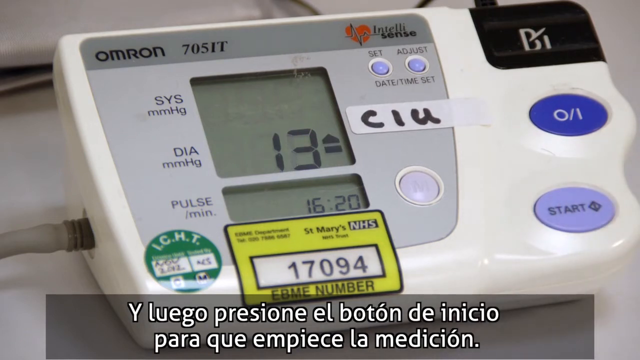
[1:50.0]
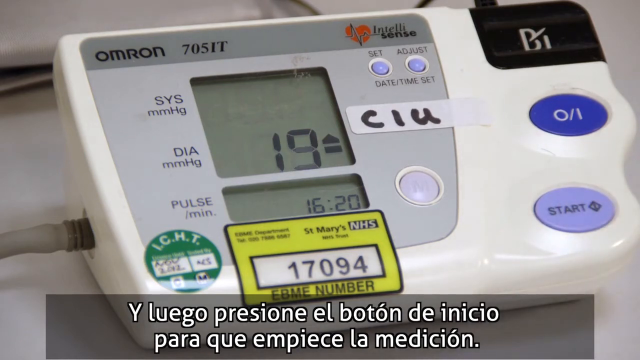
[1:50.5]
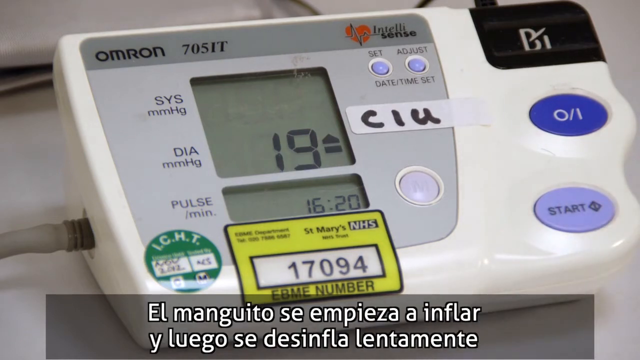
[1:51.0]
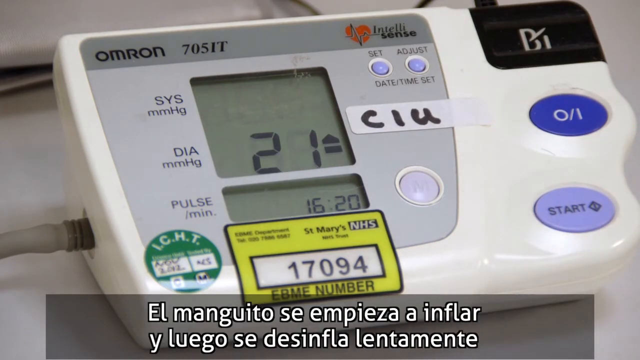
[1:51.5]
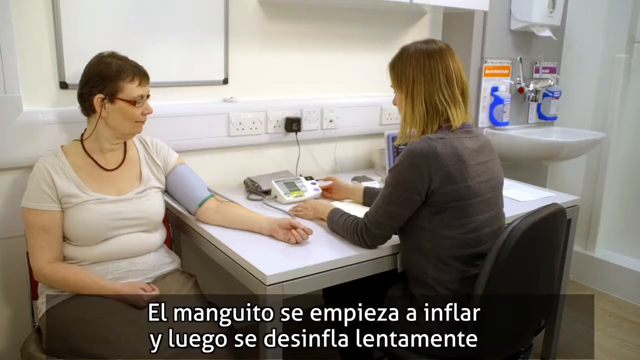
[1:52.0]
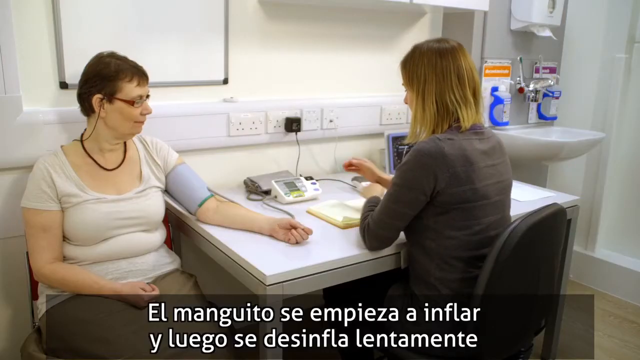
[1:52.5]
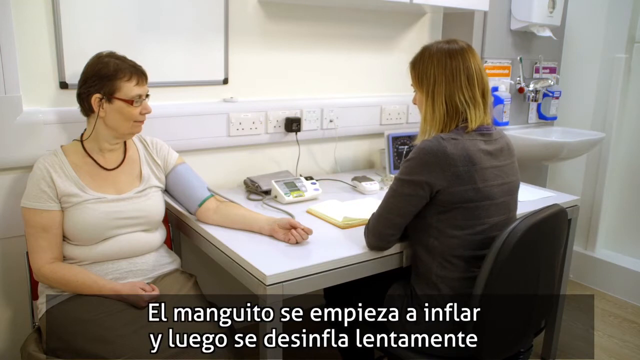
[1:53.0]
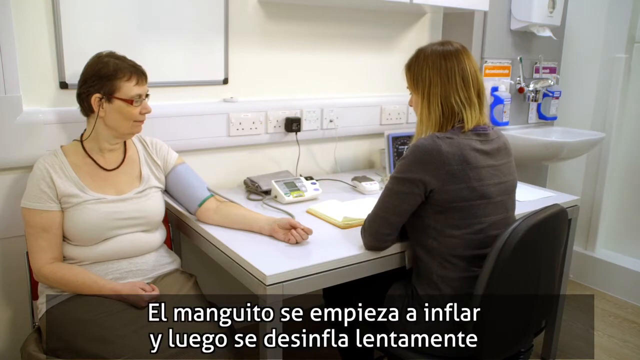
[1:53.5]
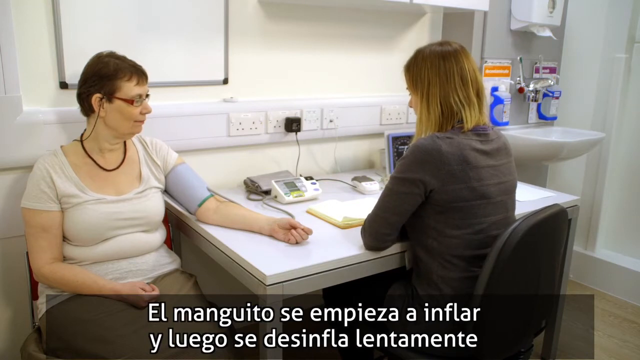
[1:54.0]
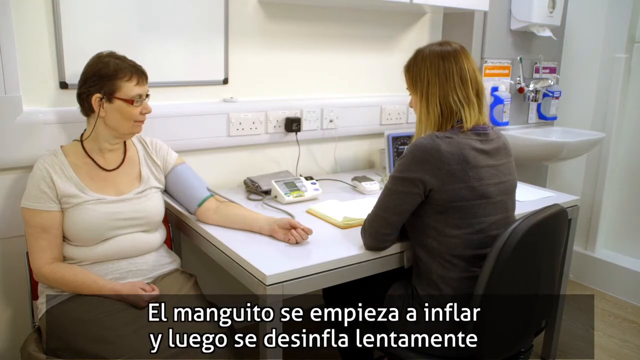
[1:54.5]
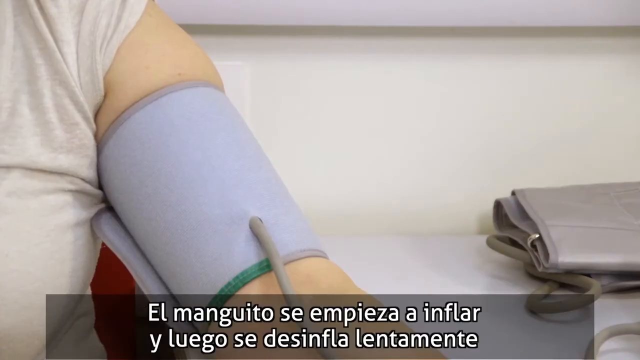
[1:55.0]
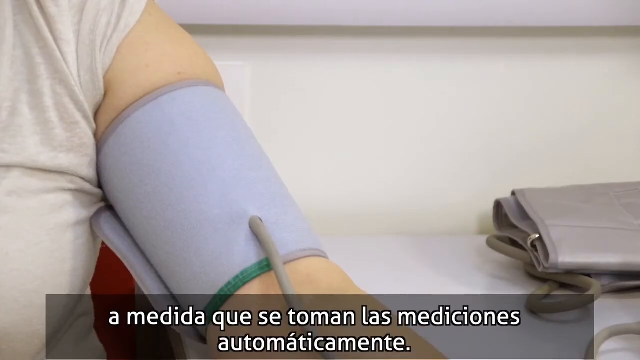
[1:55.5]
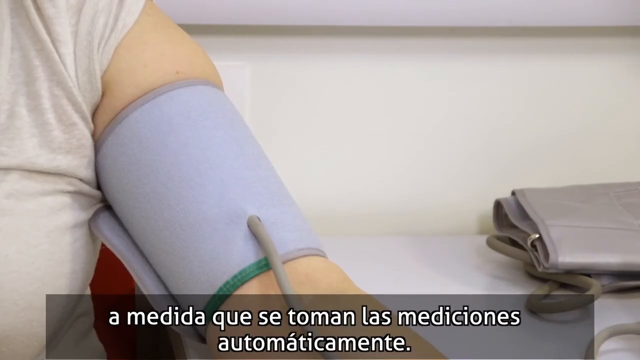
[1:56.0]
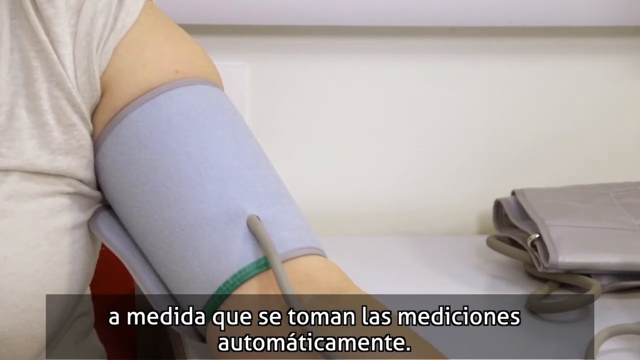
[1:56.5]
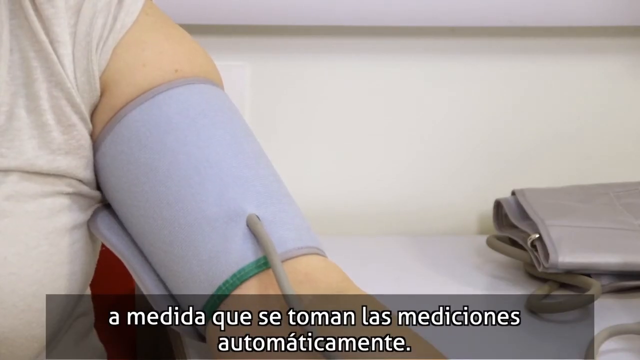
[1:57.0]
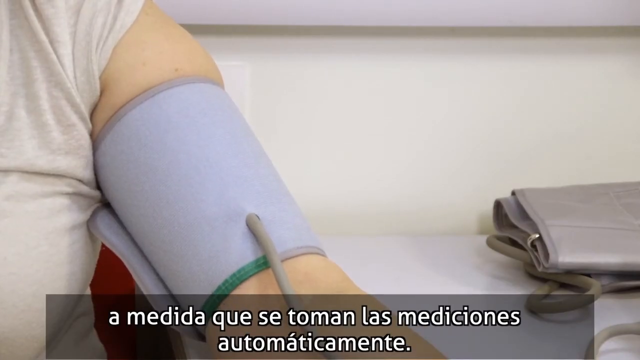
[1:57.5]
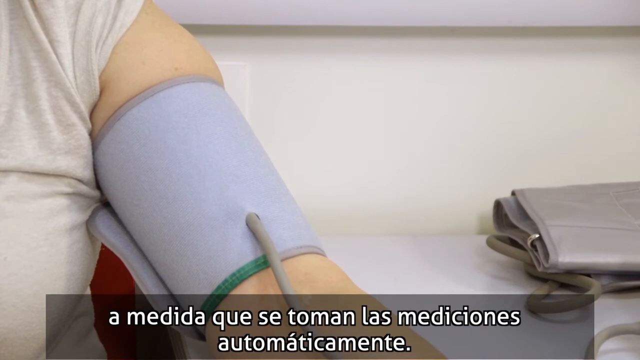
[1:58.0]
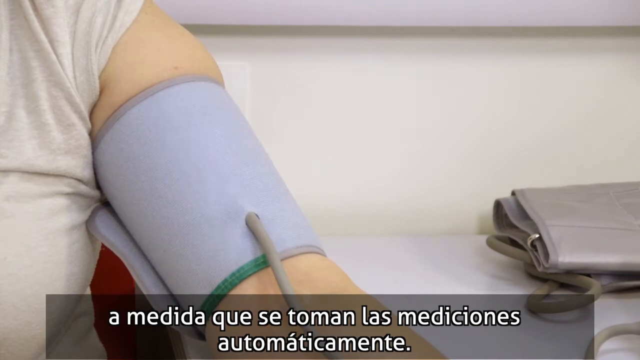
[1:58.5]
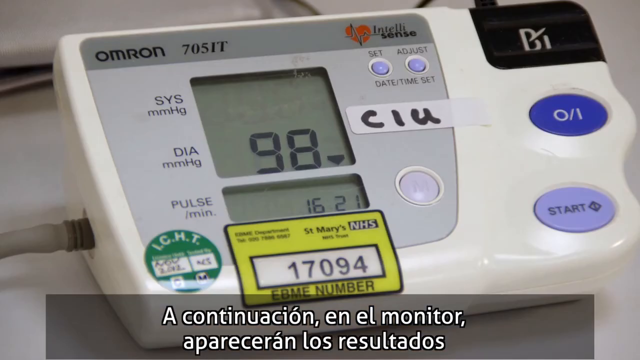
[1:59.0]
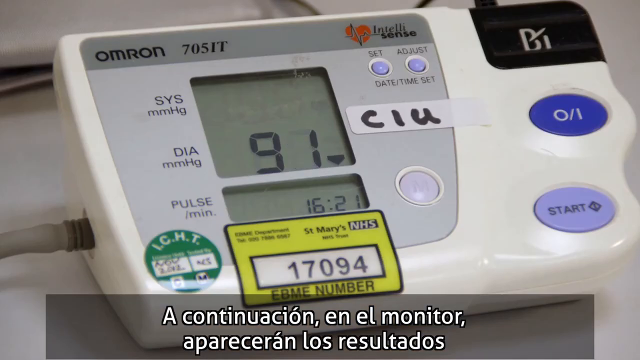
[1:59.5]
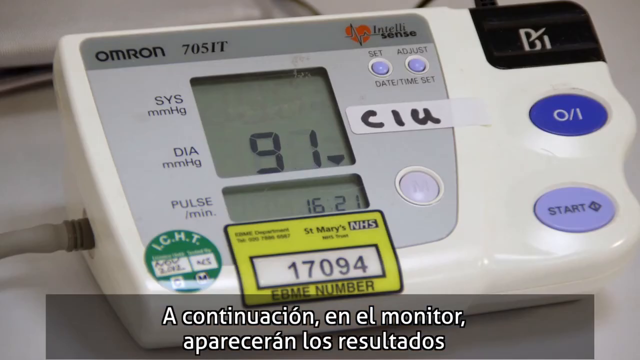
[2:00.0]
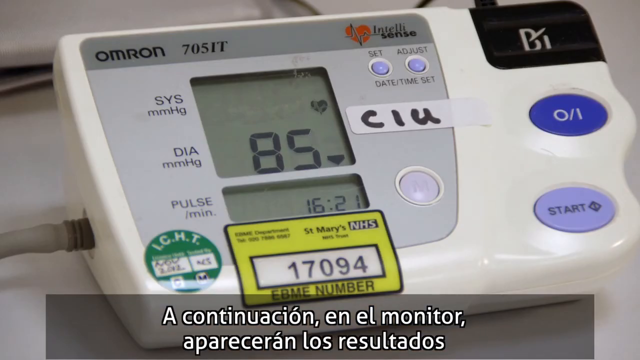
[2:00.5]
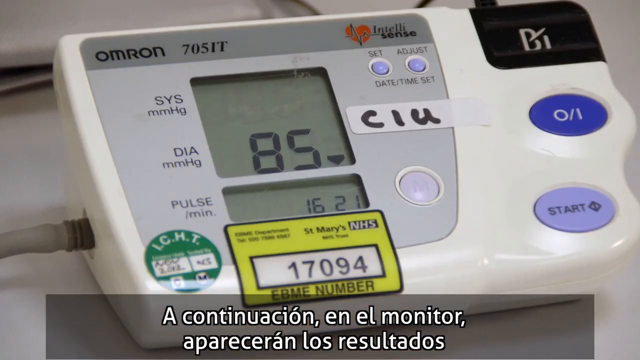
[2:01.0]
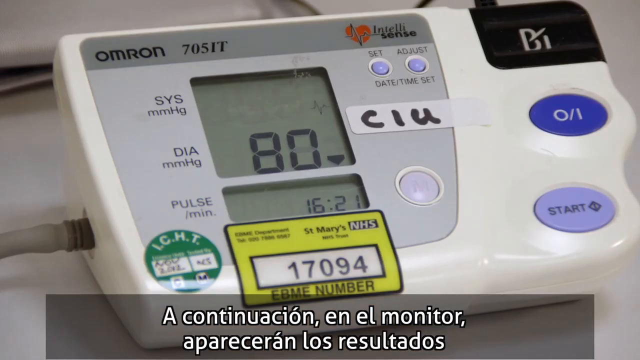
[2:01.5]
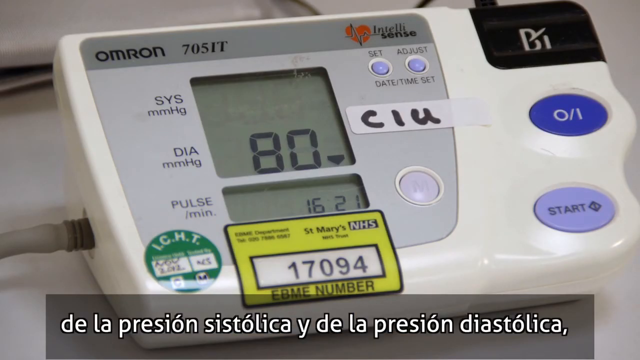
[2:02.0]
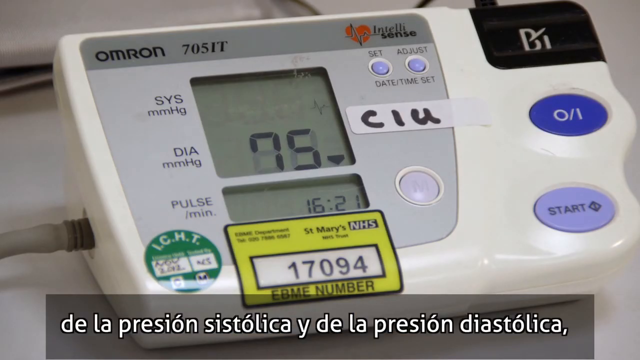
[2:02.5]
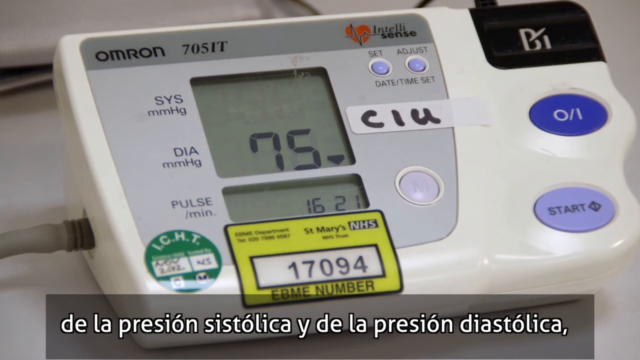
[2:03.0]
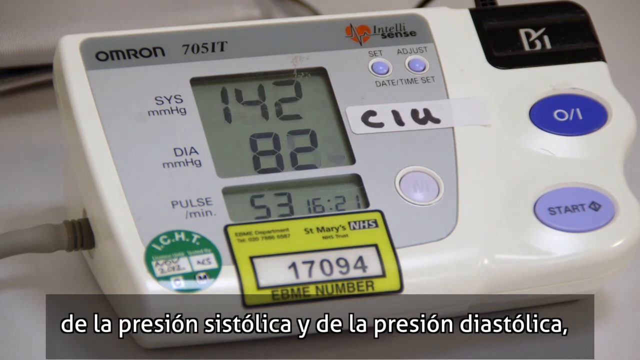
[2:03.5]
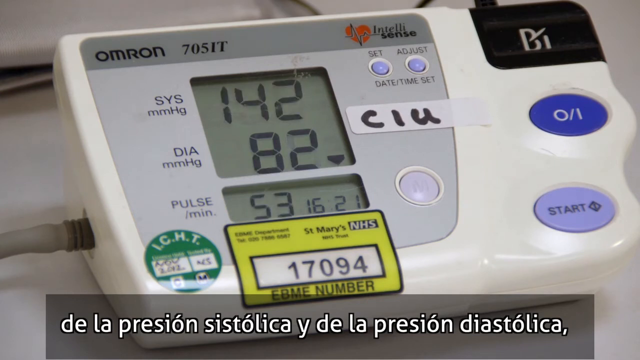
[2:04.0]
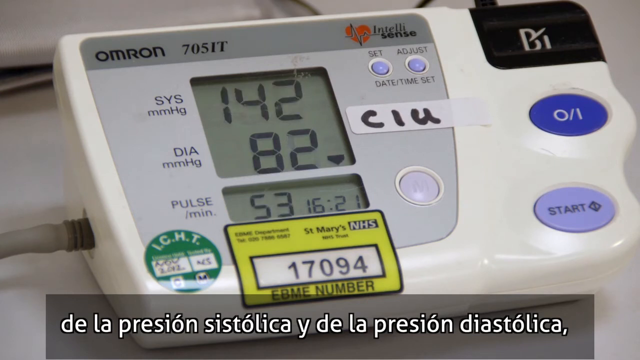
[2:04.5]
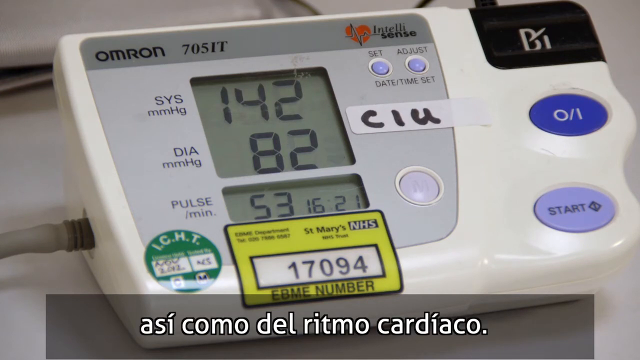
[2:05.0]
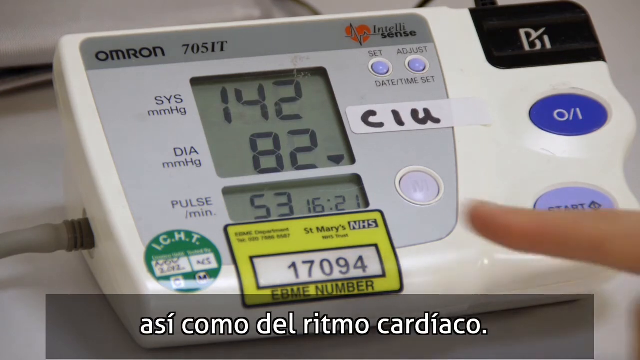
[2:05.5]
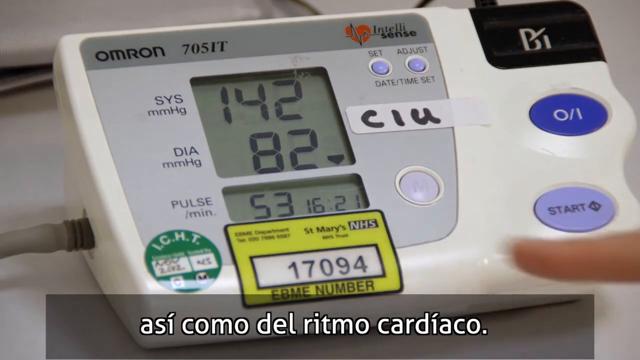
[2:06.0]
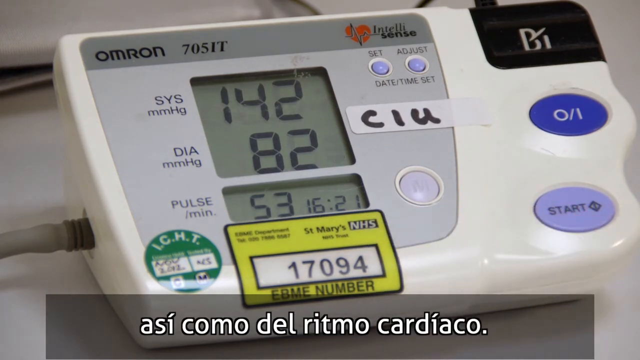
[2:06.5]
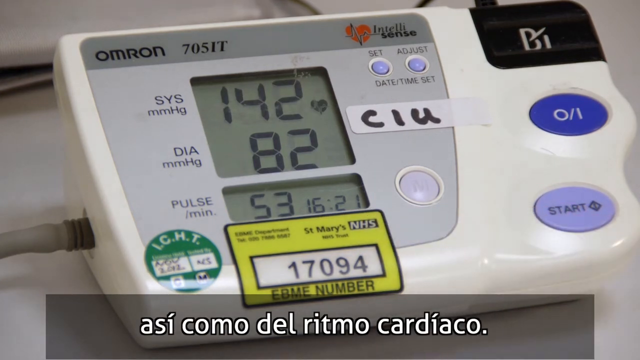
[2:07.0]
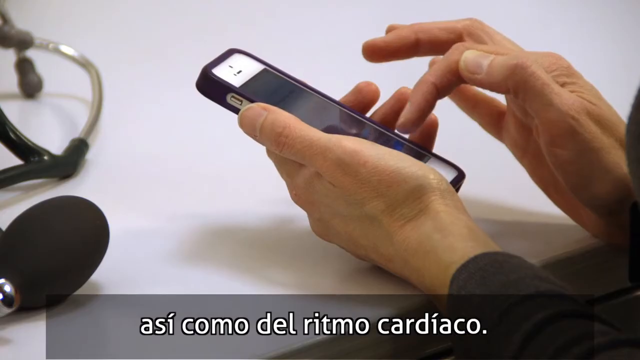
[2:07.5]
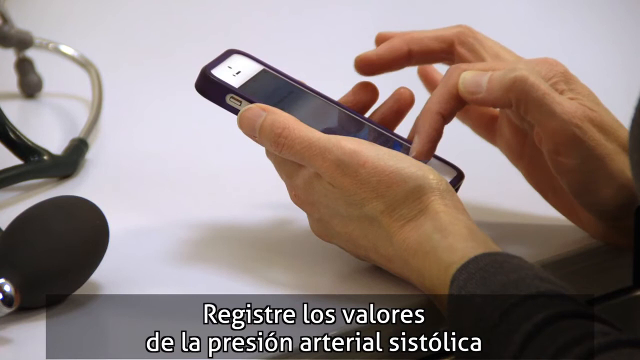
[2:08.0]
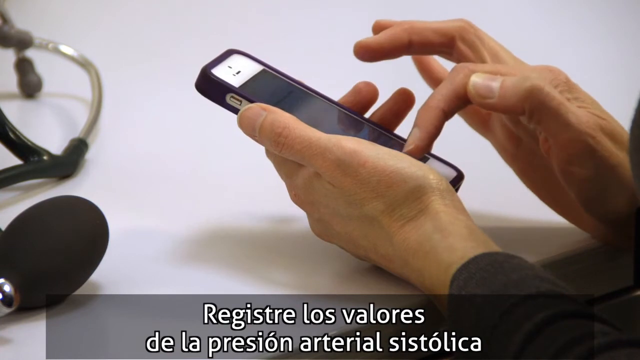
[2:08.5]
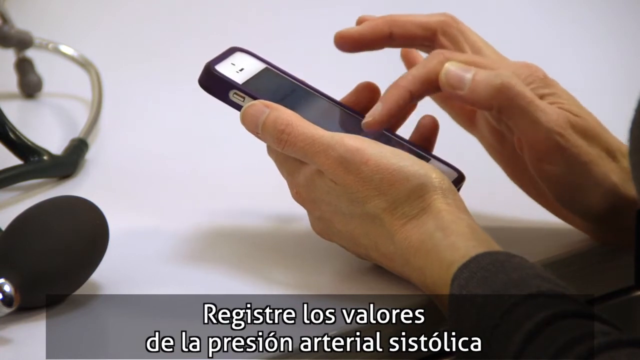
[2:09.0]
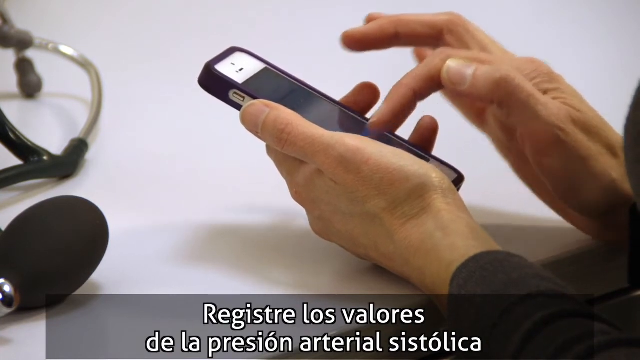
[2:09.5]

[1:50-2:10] A blood pressure monitor shows its numbers going up from a very low number, reaching 142 over 82. A gray heart pulses with the heartbeat on the display while the measurement is taken. A hand then holds a cell phone or calculator and types in the numbers. The monitor is mostly white on the outside, with a mostly gray display area; a darker gray band at the top reads "OMRON" and "705IT." The start button is kind of a light purplish color, and a navy reset button has "0/1" on it.